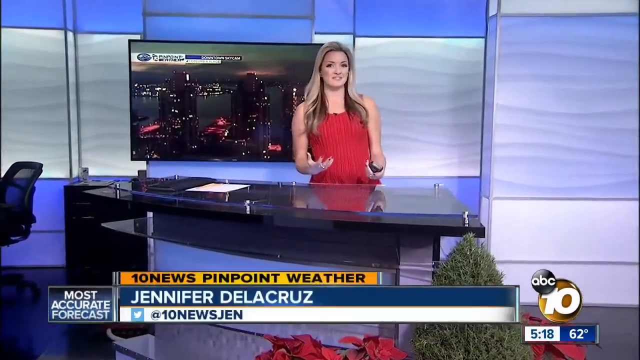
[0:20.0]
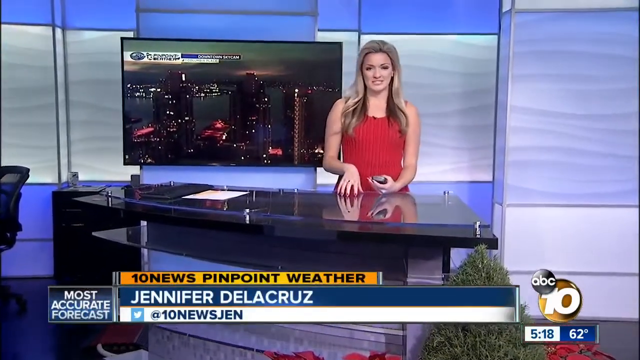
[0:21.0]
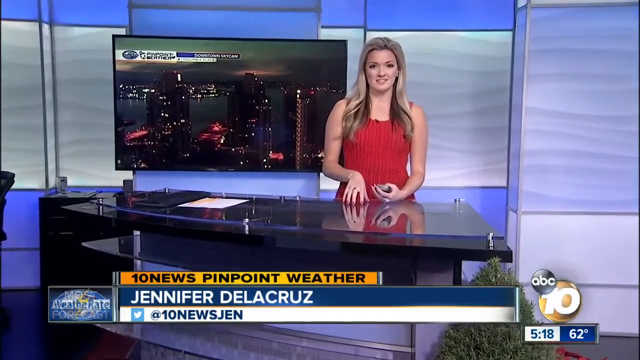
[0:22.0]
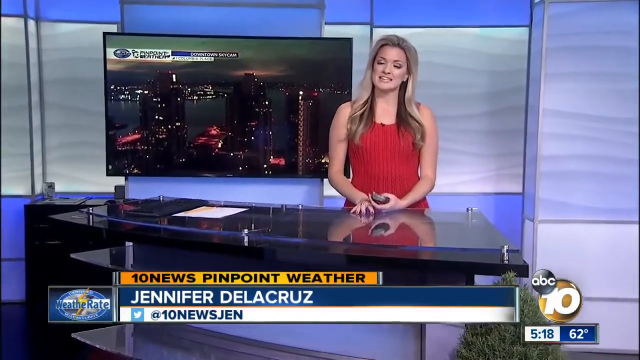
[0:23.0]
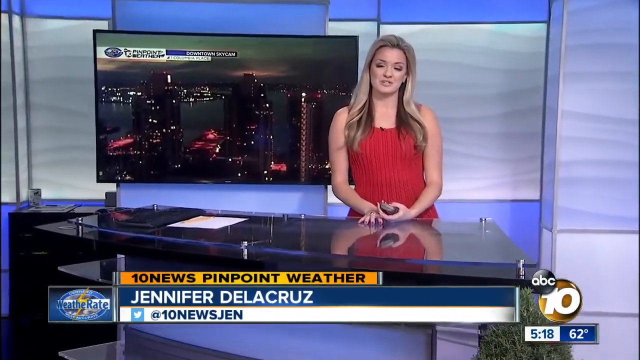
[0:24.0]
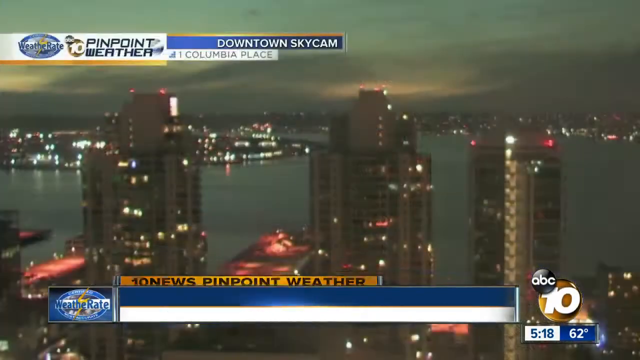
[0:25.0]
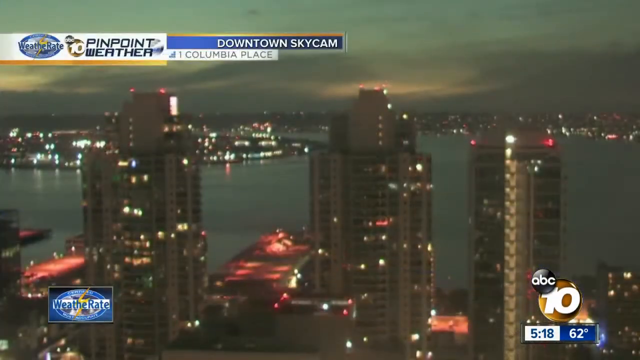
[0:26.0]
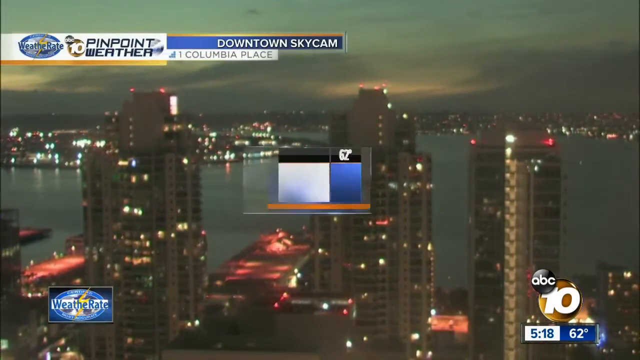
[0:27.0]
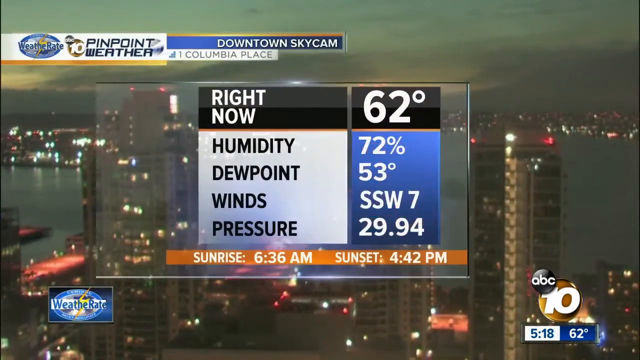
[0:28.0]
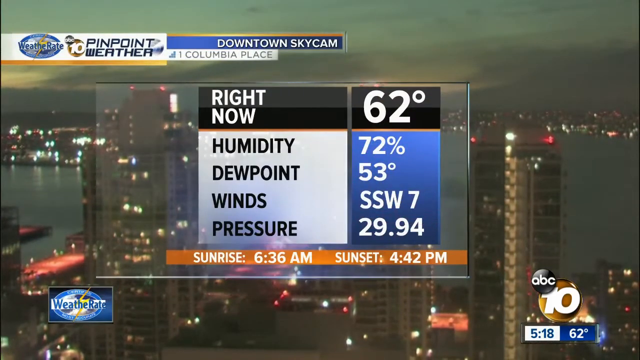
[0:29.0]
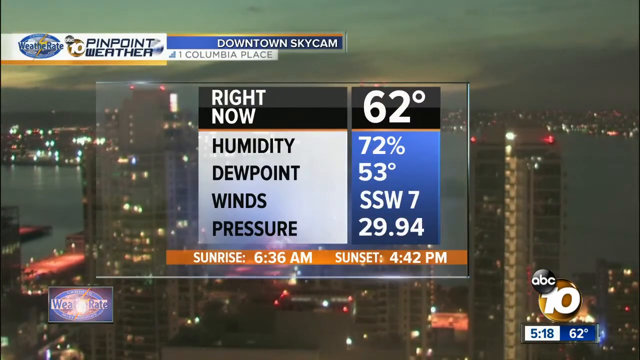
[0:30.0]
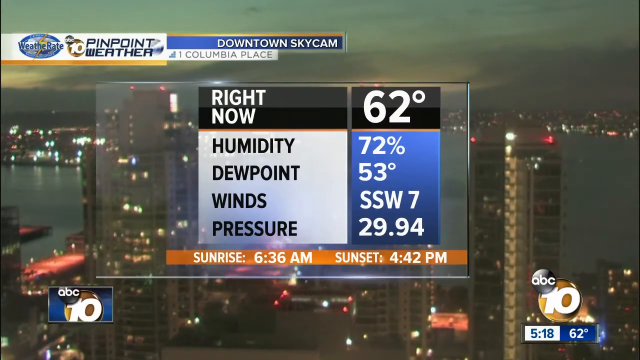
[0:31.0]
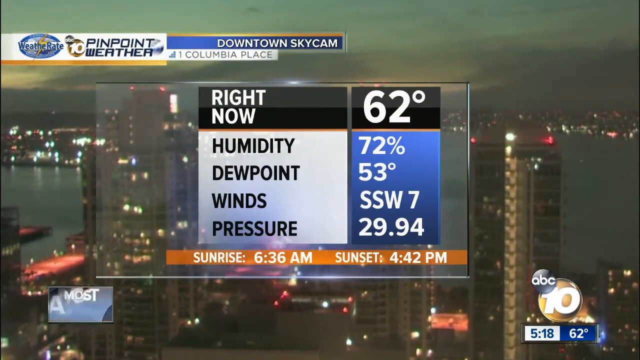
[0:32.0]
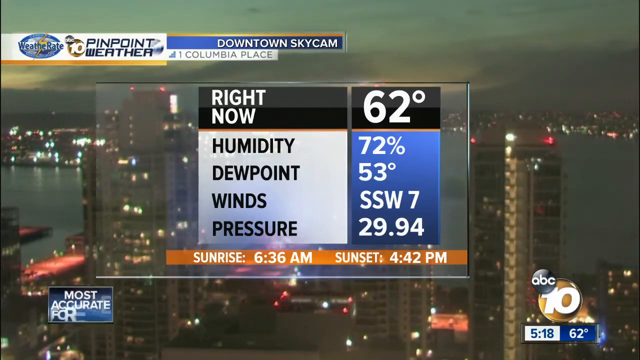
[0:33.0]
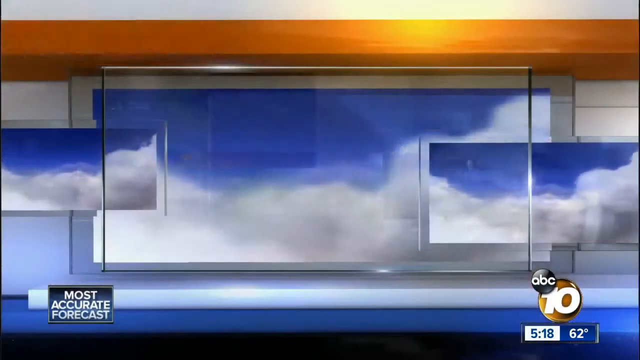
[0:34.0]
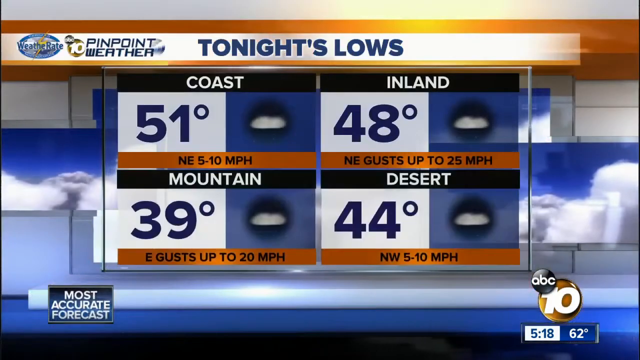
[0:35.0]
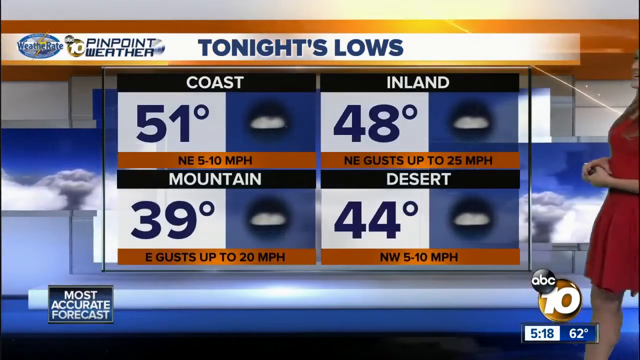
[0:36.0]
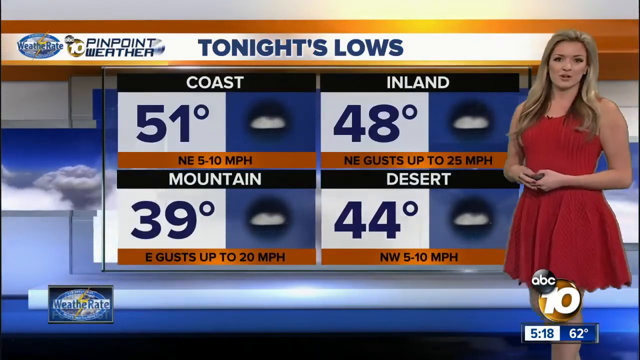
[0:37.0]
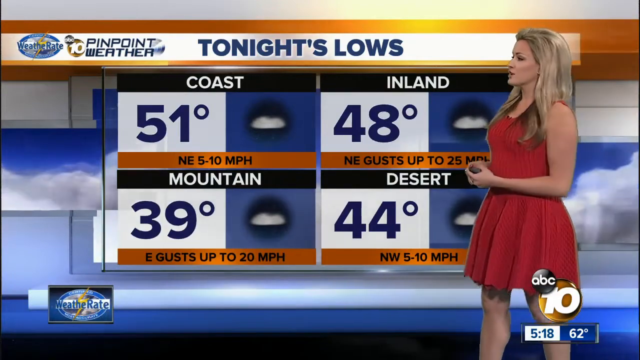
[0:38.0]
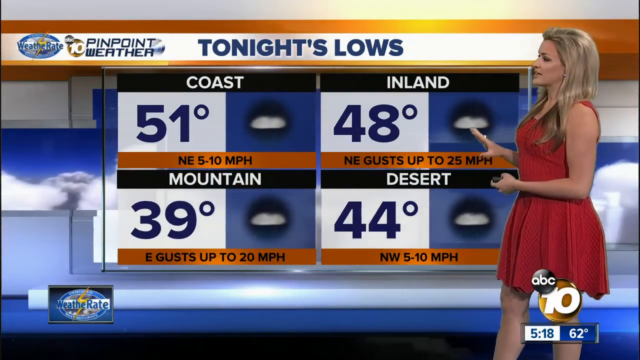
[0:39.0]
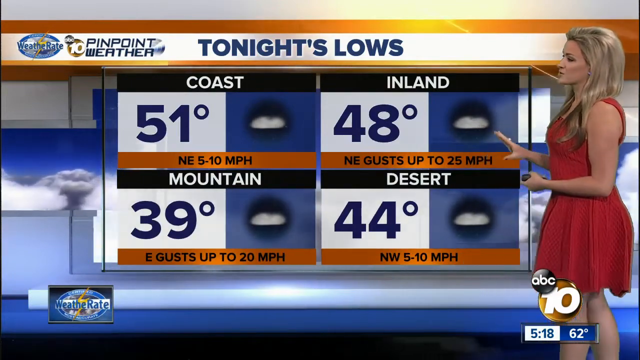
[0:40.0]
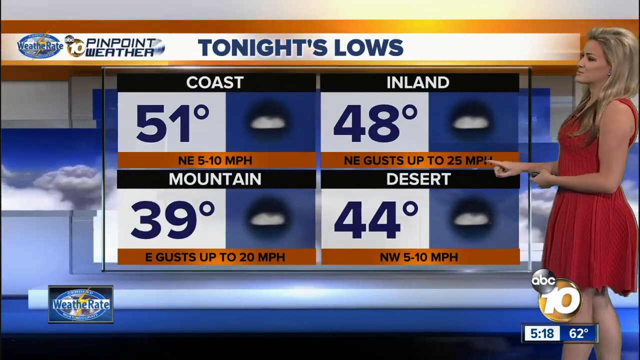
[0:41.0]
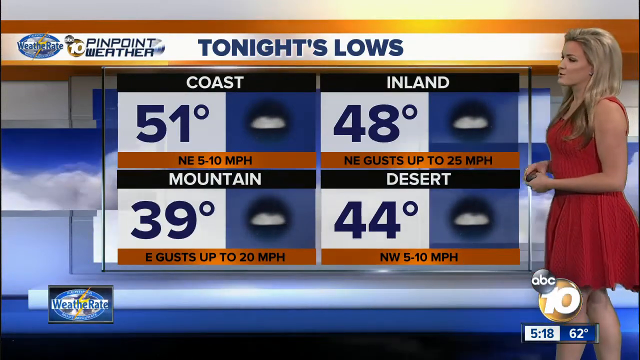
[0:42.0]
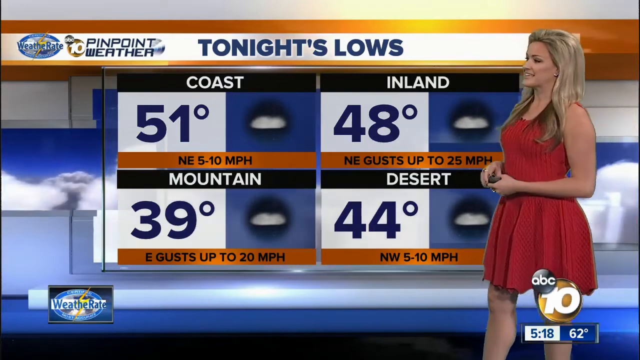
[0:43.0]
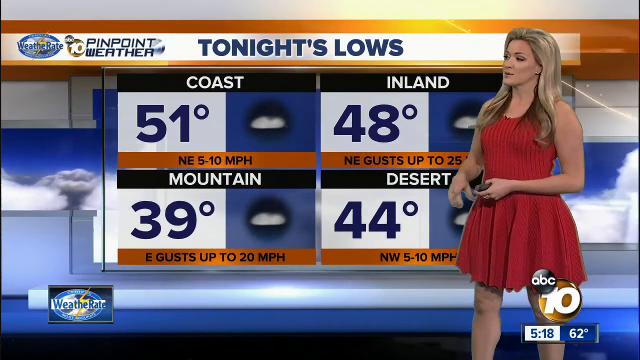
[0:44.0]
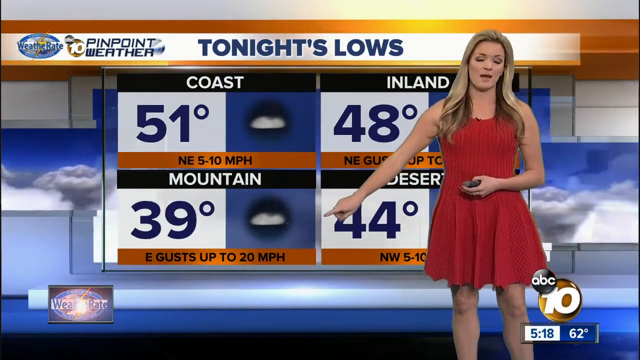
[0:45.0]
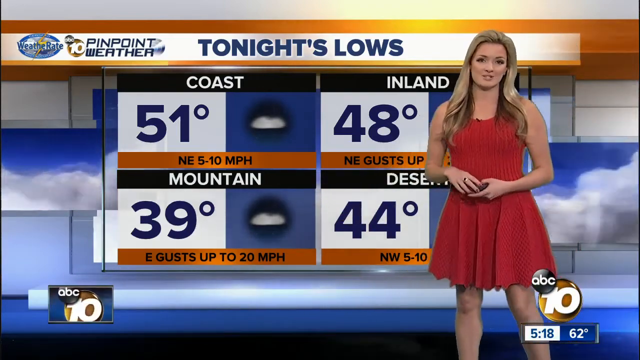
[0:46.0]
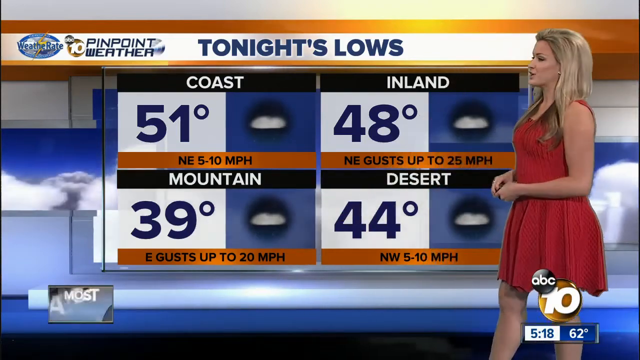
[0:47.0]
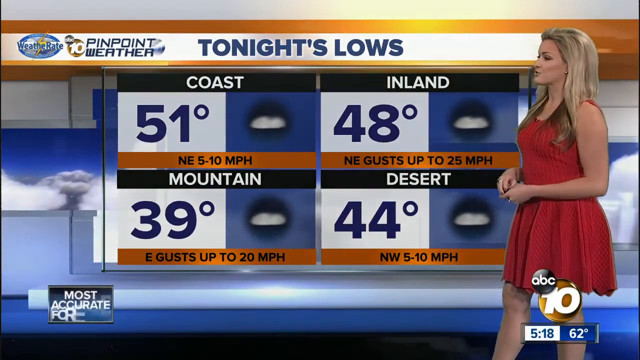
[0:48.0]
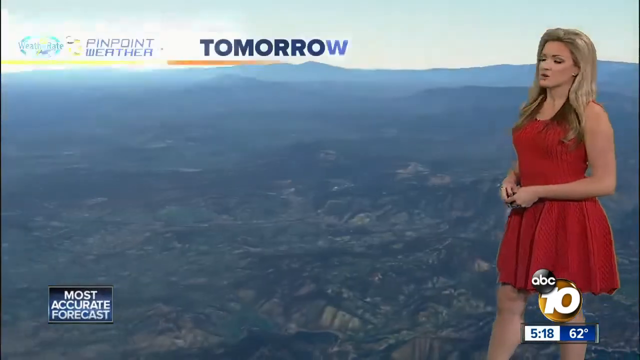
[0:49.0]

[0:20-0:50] The shot focuses on the woman in the short red dress. She is Caucasian with long blonde hair, probably in her 30s, and she is standing behind a desk, with a nighttime cityscape on a TV screen behind her. At the bottom, her name, Jennifer Della Cruz, is in white all caps in a blue text box; above it, a smaller yellow text box reads "10 news pinpoint weather" in black caps, with a logo to its left that apparently reads "weather rate" and has the lightning logo from the opening. Below the blue box is a white text banner with a small Twitter icon and her Twitter handle. The camera pans in close to the nighttime cityscape on the screen behind her; a blue banner at the top identifies it as the downtown sky cam, and the pinpoint weather, number 10 and weather rate logos are in the upper left. A box comes in with a black band at the top reading "right now" in white, and a very large "62 degrees." Beneath it on the left, on a white background, four rows in black caps list humidity, dew point, winds and pressure, and to the right, in white text on blue, are the values "72 percent," "53 degrees," "ssw7" and "29.94." A small orange band below shows the sunrise and sunset times in white text. The scene switches and she is now standing on the right, wearing a red tank-top dress with a short, seemingly gathered or pleated skirt. A graphic titled "tonight's lows" shows four boxes in two rows of two, each with a black banner at the top reading coast, inland, mountain and desert. The temperatures, 51 degrees, 48 degrees, 39 and 44, are in large blue text in white boxes, each with a cloud to the right on a blue background, and an orange text box beneath each shows the wind in miles per hour. Rolling clouds fill the background on the right and left.